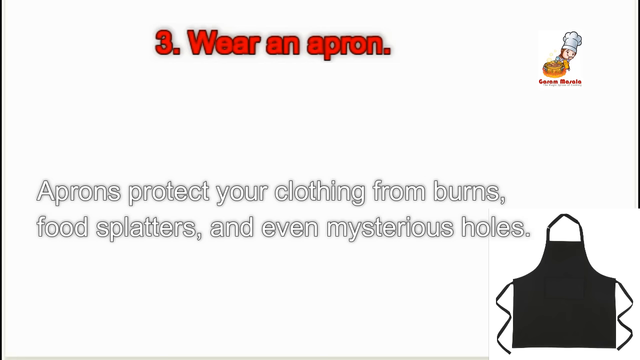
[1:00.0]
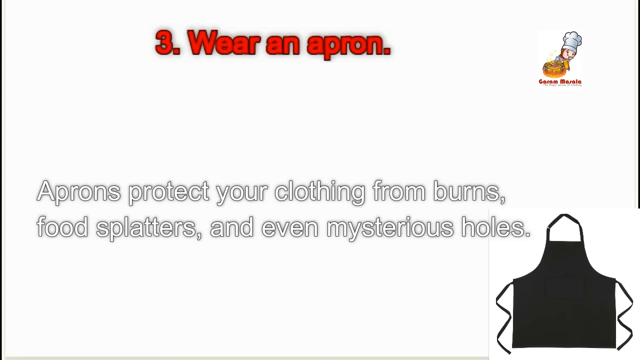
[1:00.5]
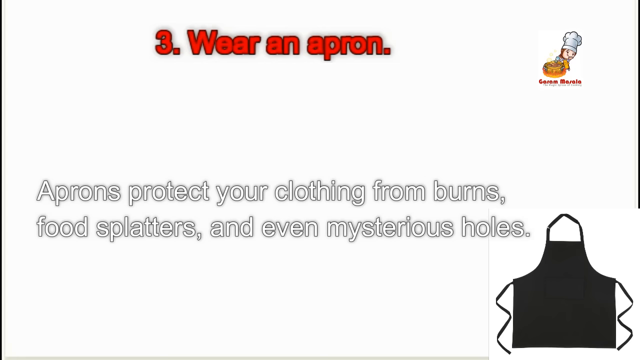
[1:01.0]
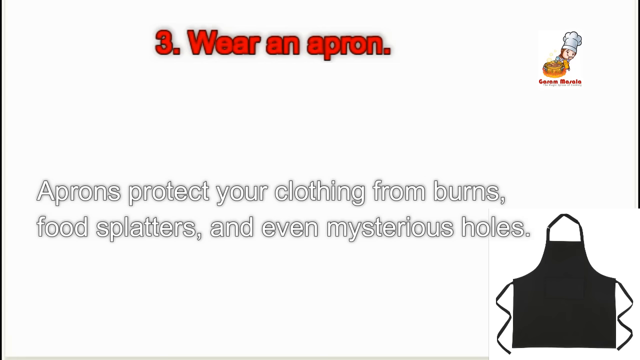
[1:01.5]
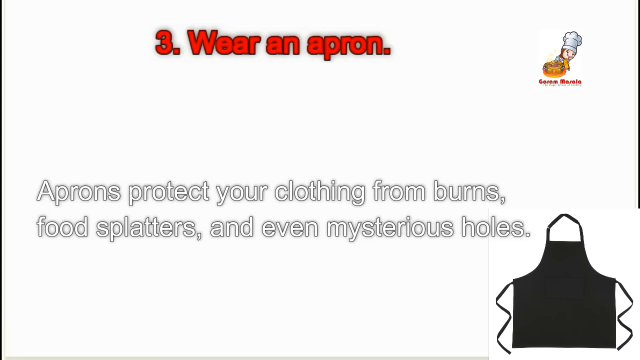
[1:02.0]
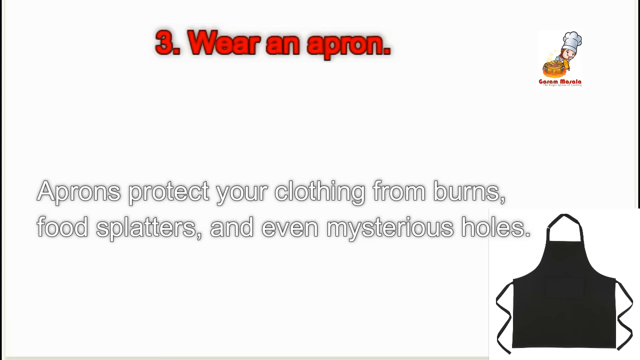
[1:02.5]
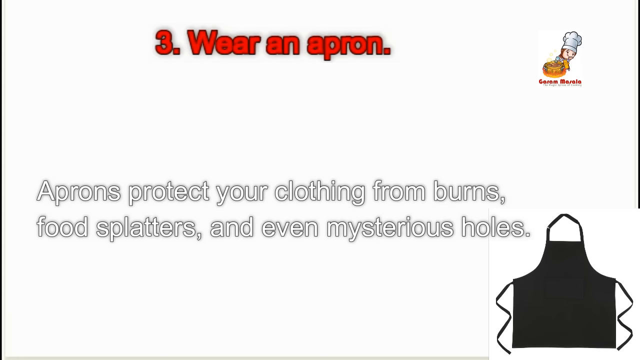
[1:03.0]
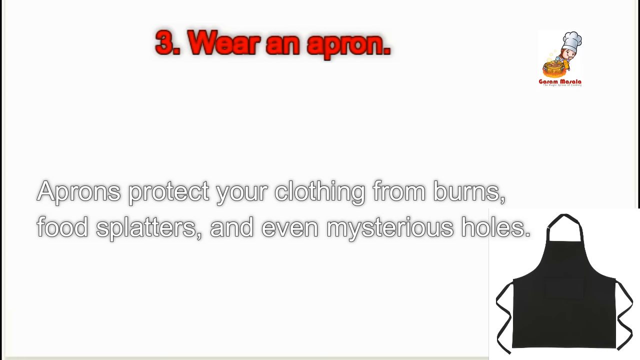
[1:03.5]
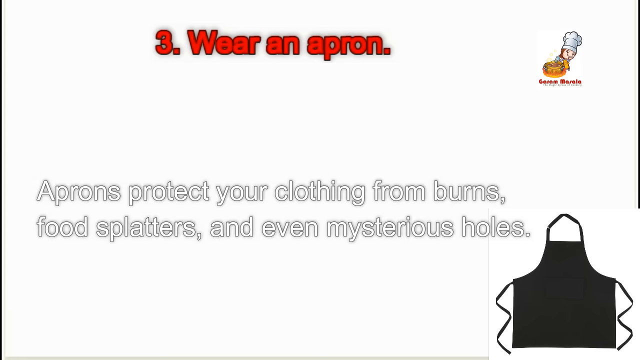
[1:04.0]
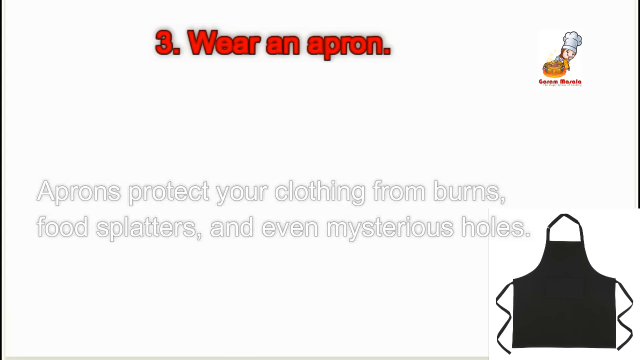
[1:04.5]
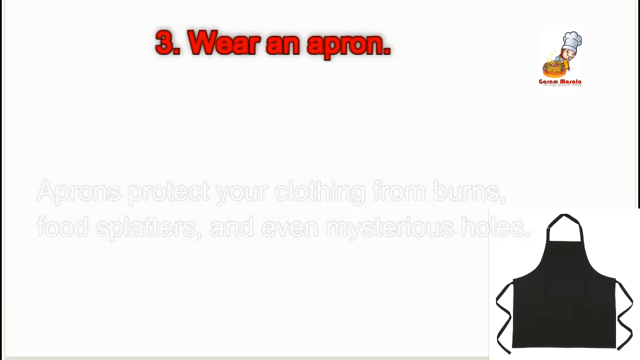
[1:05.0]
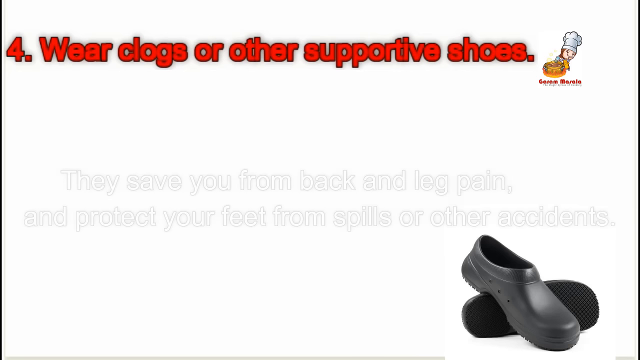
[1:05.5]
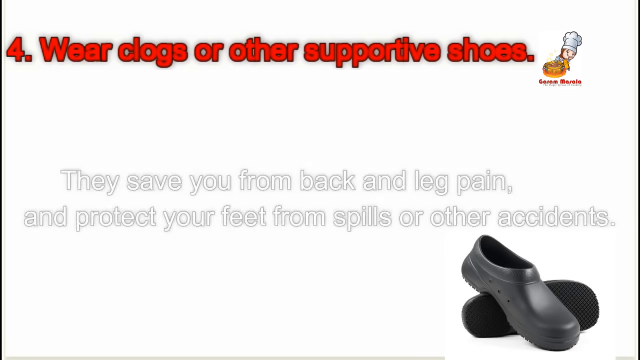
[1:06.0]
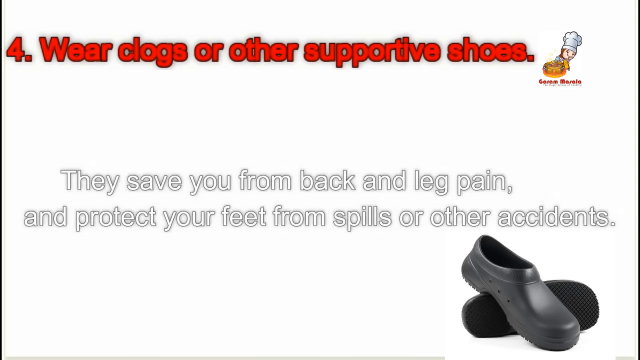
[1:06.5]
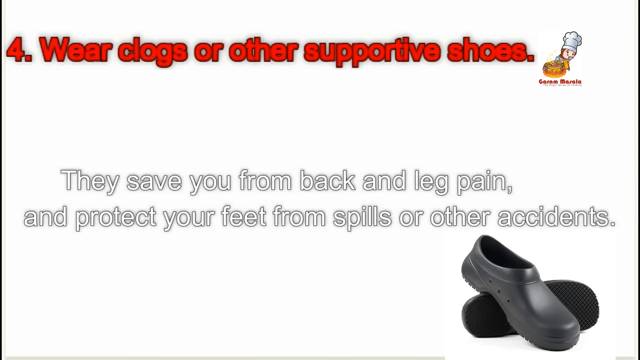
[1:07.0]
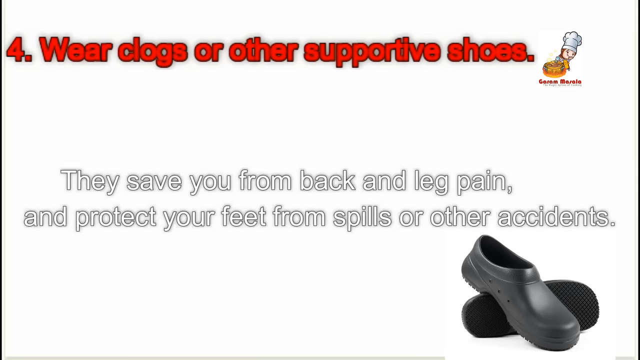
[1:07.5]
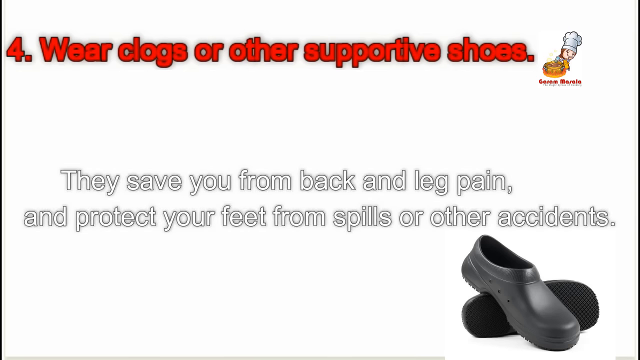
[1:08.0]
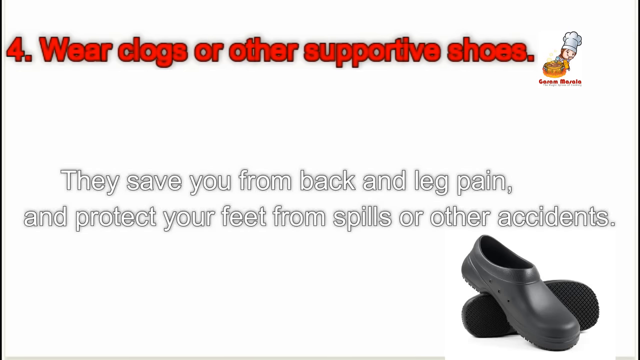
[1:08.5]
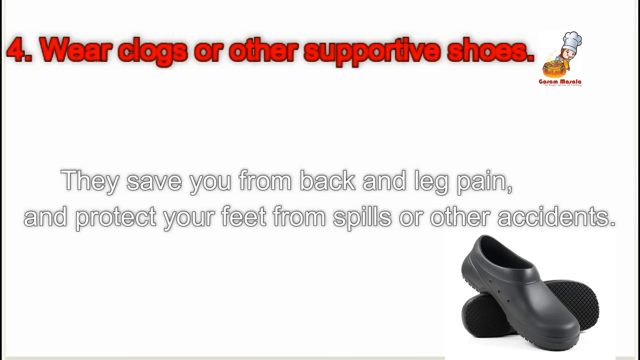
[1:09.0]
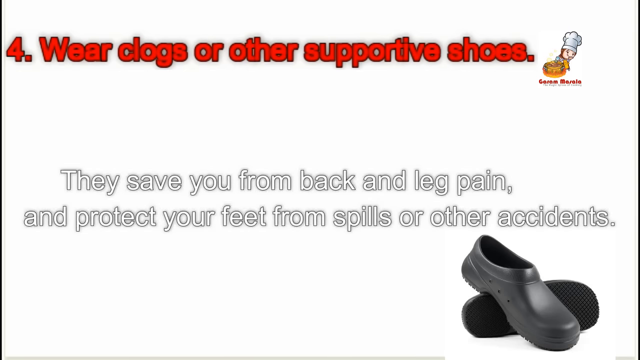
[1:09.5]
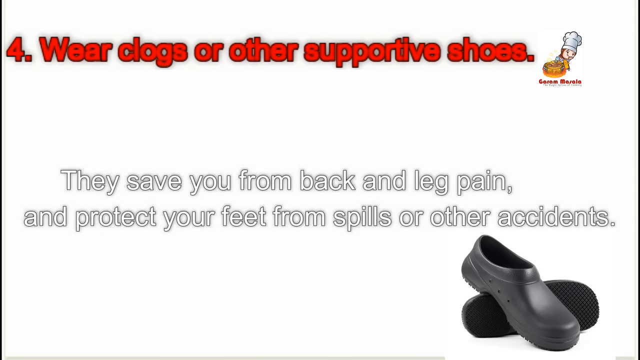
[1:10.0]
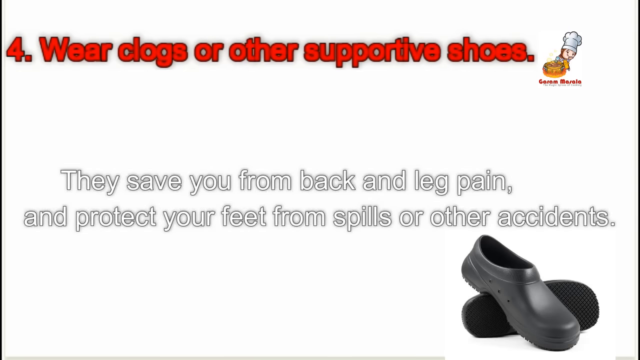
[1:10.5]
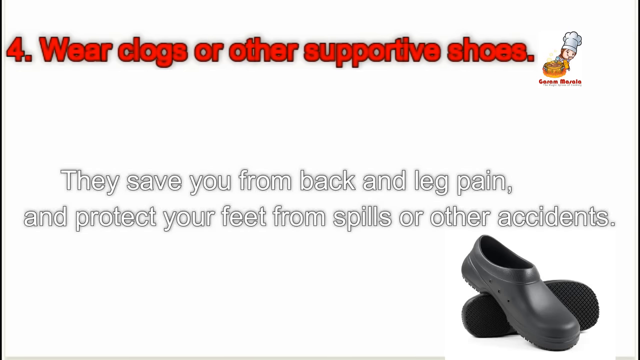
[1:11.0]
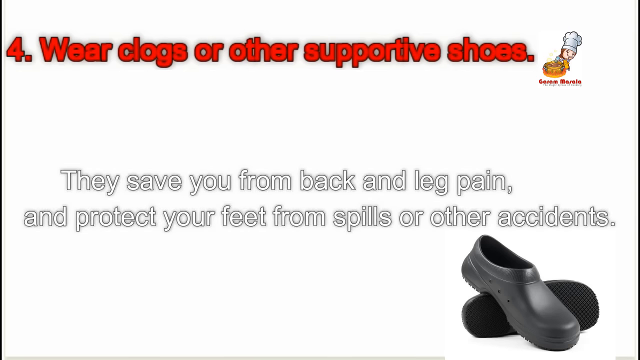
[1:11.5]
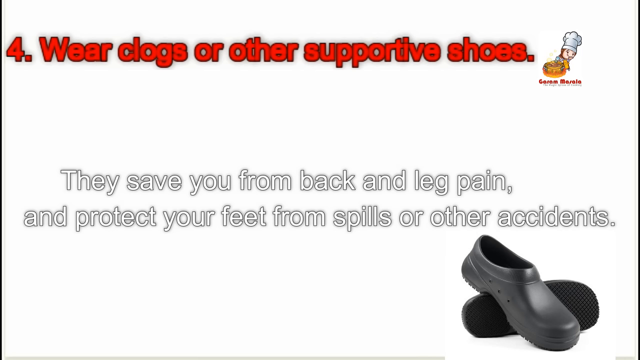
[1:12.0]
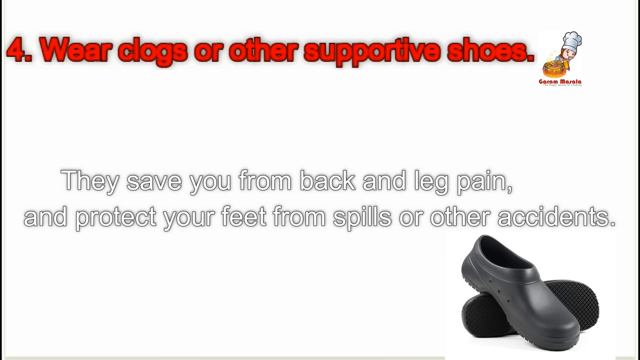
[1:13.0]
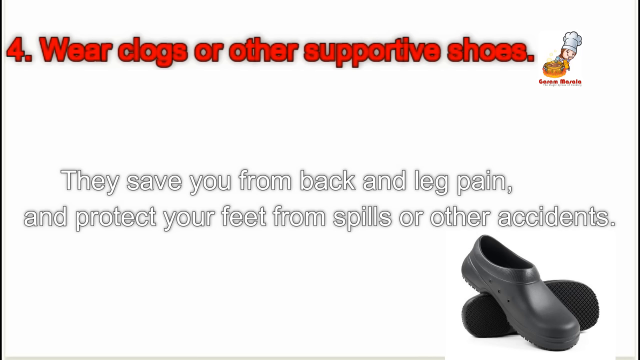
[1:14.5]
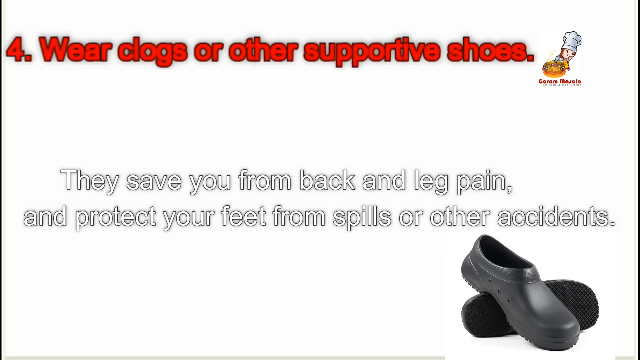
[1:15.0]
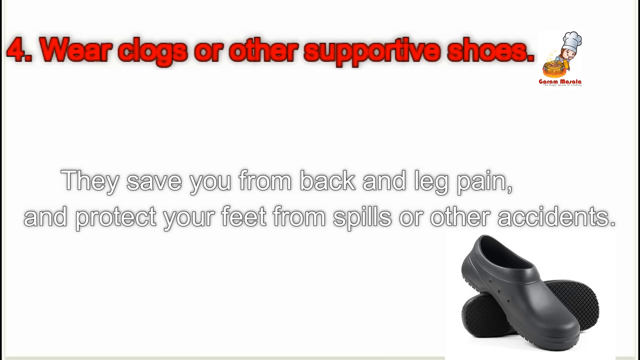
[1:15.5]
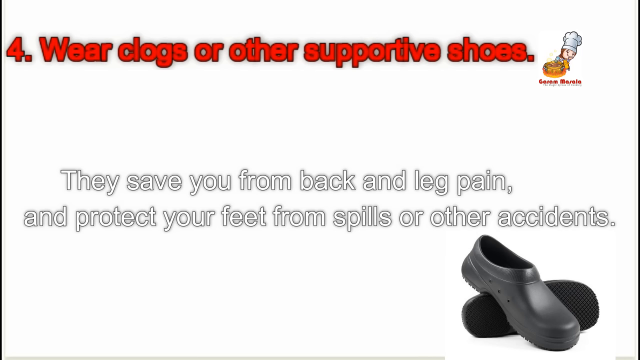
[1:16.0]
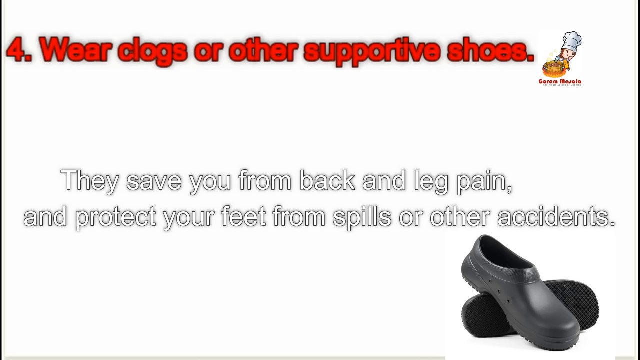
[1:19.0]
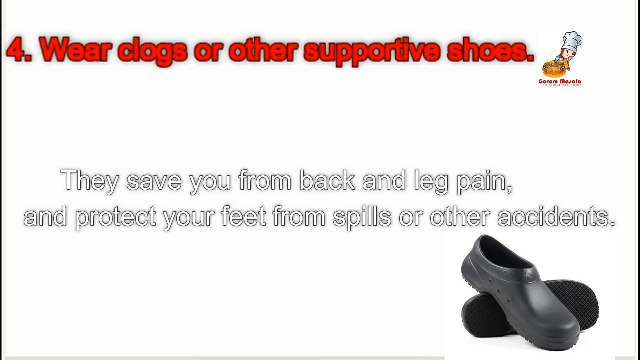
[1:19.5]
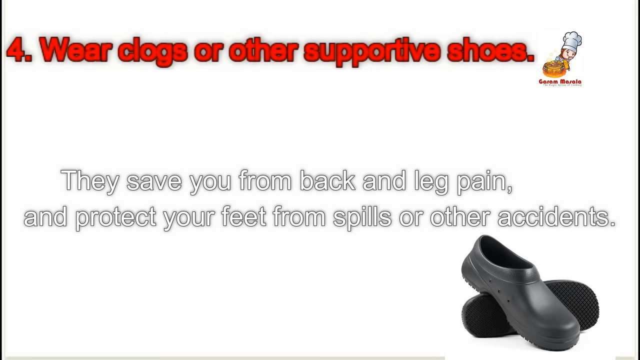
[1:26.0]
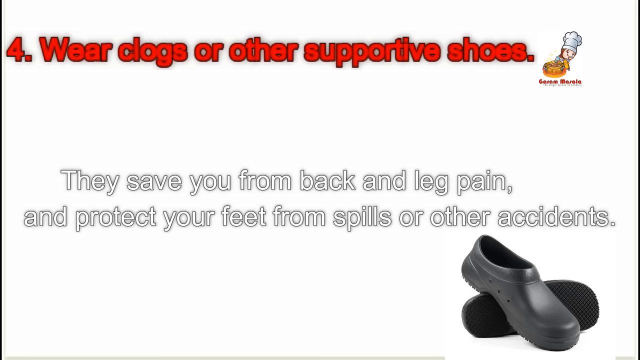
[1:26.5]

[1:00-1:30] A slide has red text on top with the number three and "wear an apron." White text with a gray border reads "aprons protect your clothing from burns, food splatters, and even mysterious holes." A black apron is in the lower right corner, and in the top right corner is a cartoon character wearing a white chef's hat with a dish in front of him and some red text below. The video cuts to another slide with red text on top showing the number four and "wear clogs or other supportive shoes." Underneath, white text reads "they save you from back and leg pain and protect your feet from spills or other accidents." In the lower right corner is a pair of black clogs with some holes visible inside them.